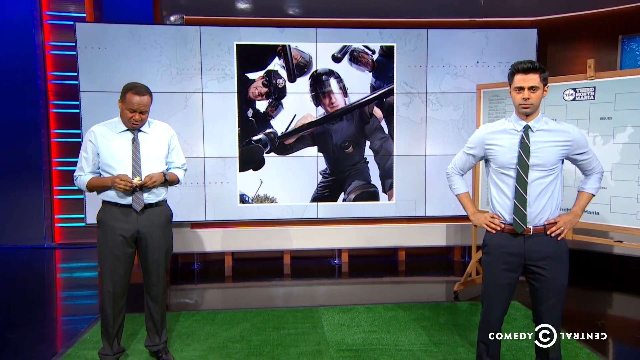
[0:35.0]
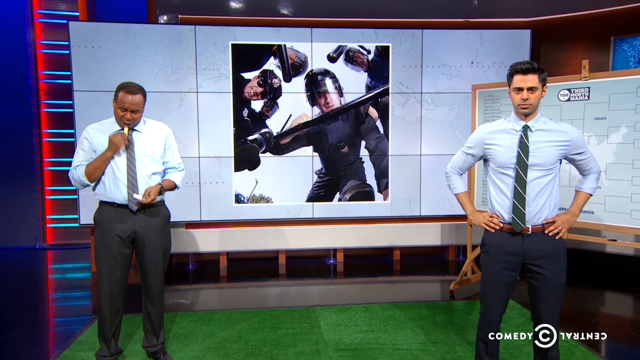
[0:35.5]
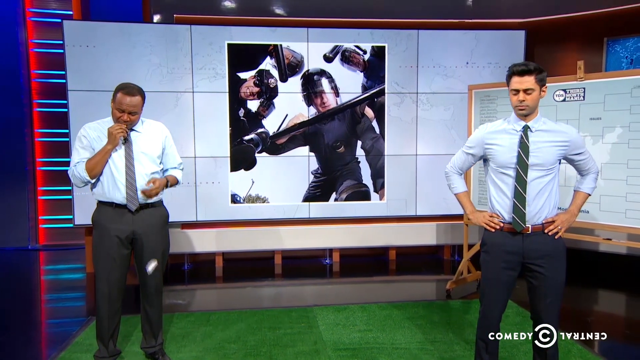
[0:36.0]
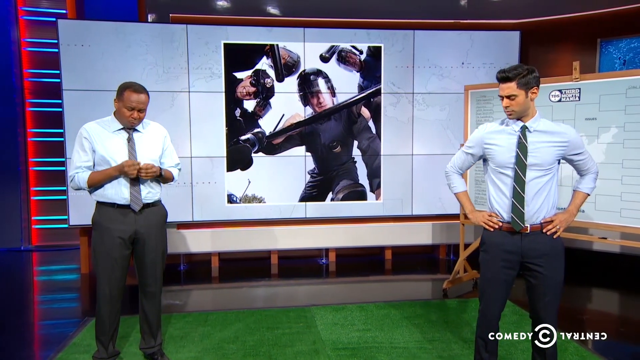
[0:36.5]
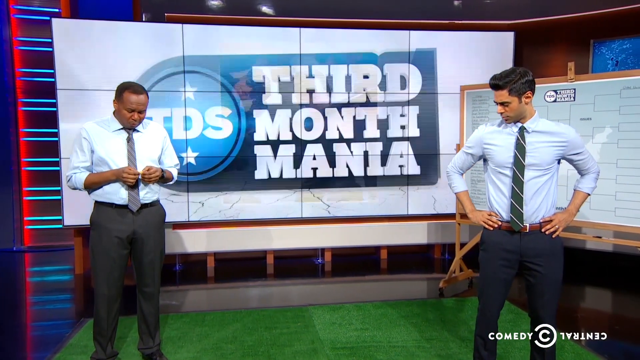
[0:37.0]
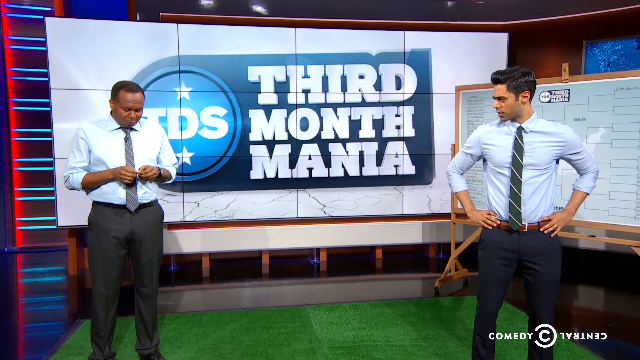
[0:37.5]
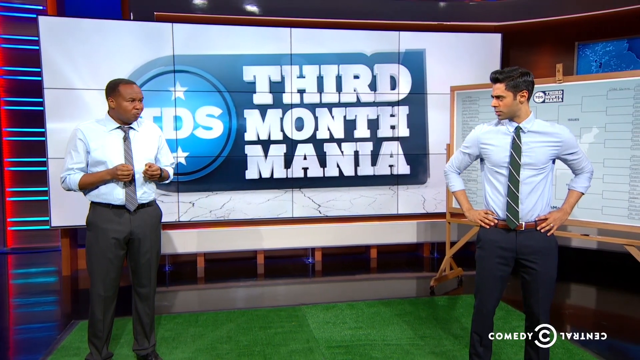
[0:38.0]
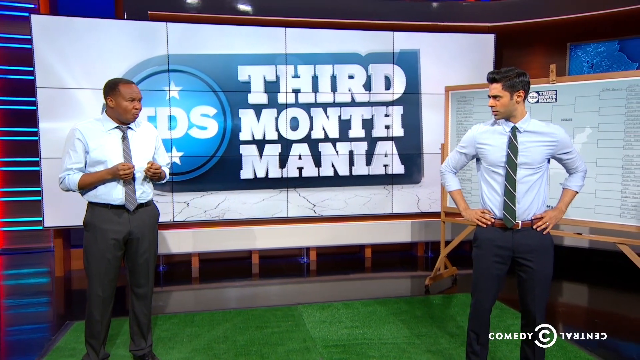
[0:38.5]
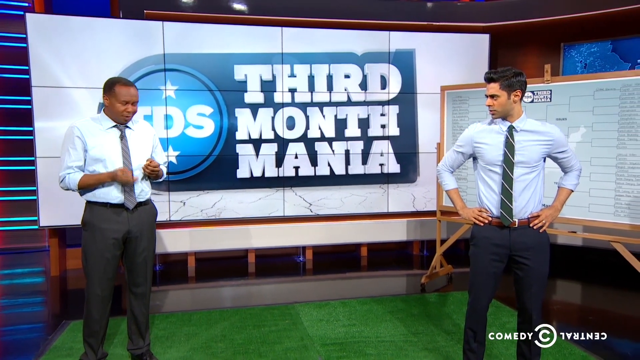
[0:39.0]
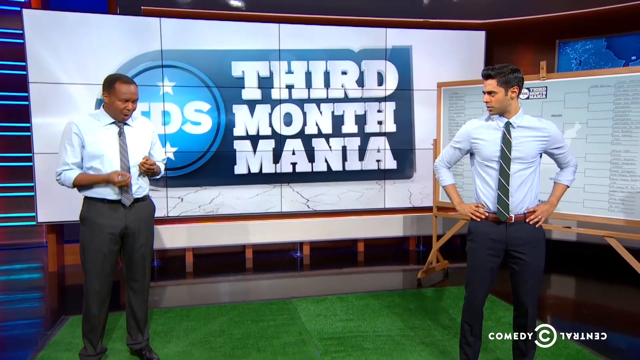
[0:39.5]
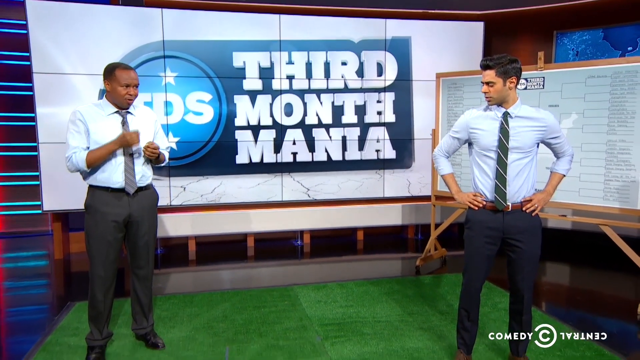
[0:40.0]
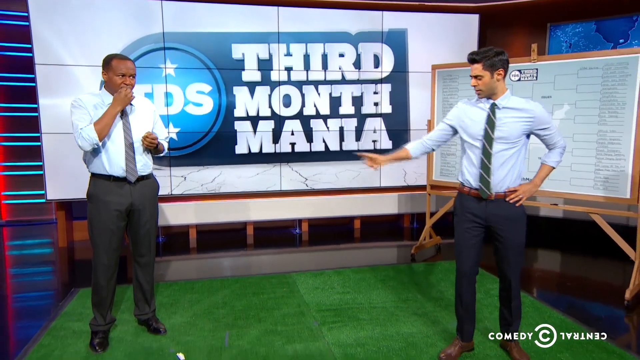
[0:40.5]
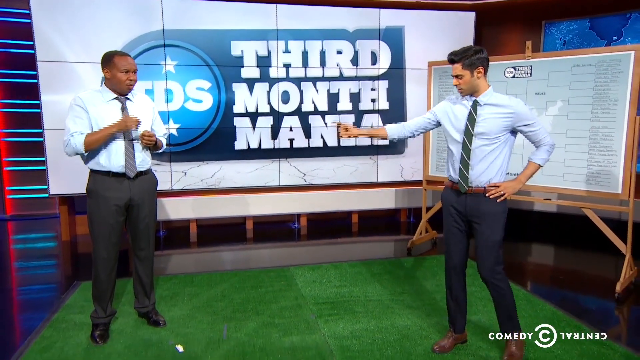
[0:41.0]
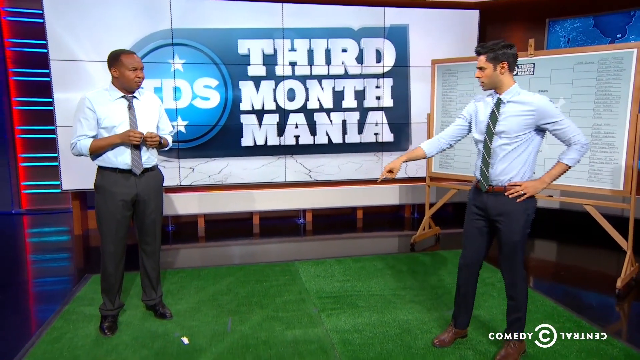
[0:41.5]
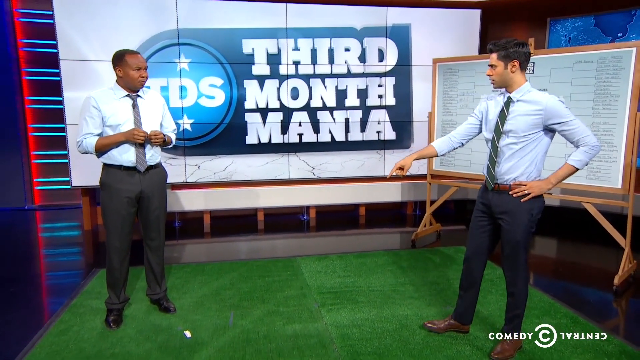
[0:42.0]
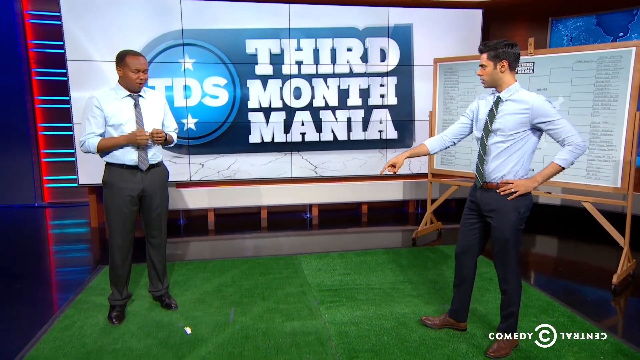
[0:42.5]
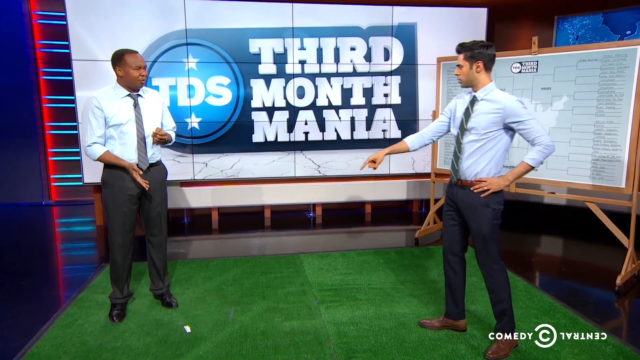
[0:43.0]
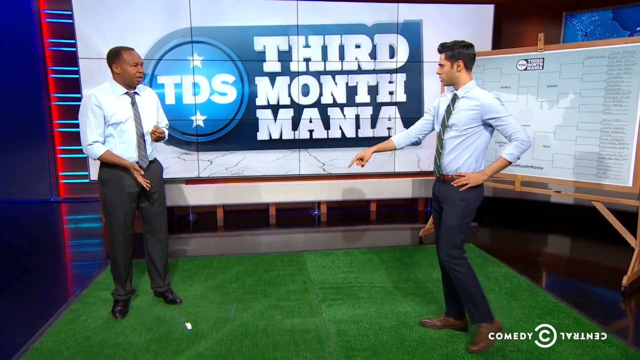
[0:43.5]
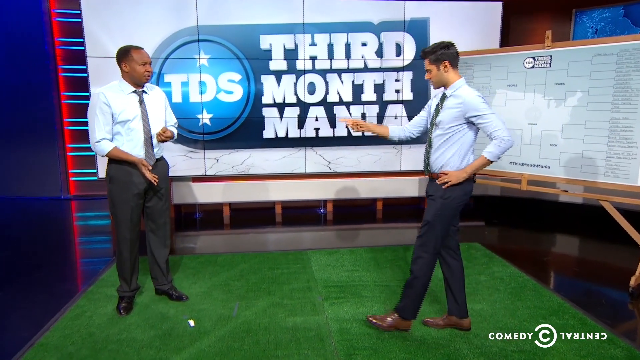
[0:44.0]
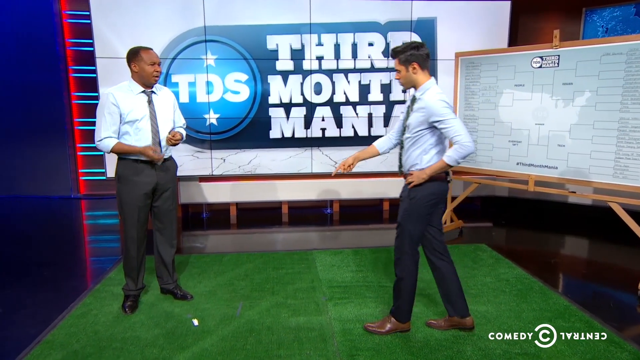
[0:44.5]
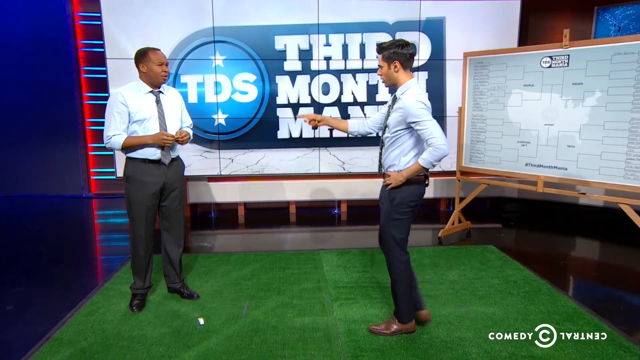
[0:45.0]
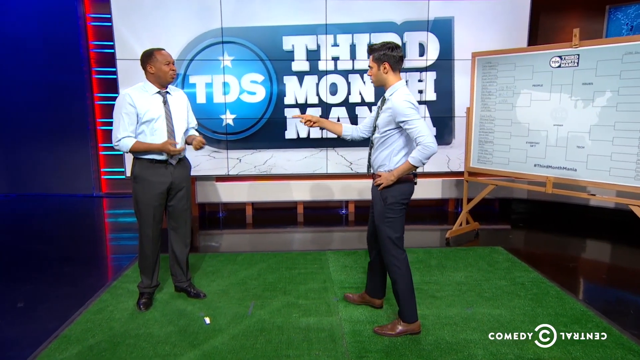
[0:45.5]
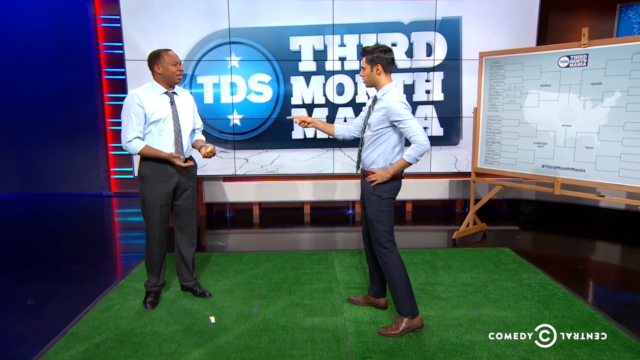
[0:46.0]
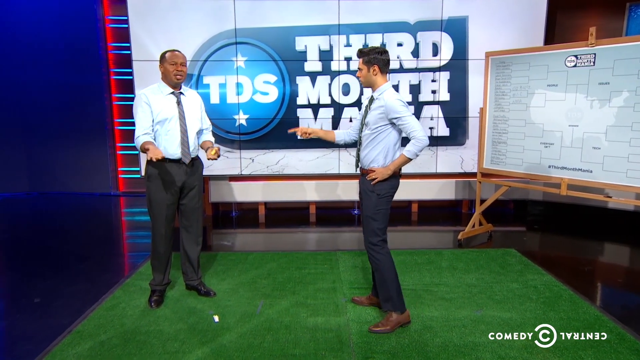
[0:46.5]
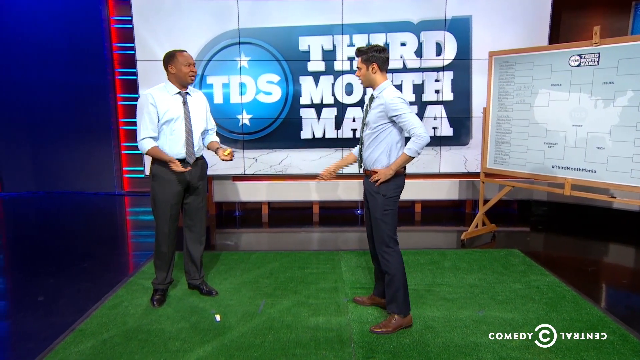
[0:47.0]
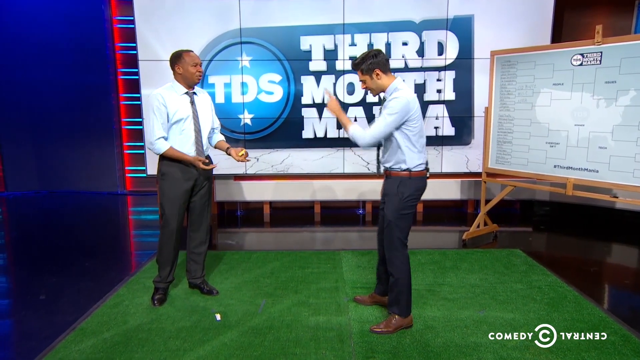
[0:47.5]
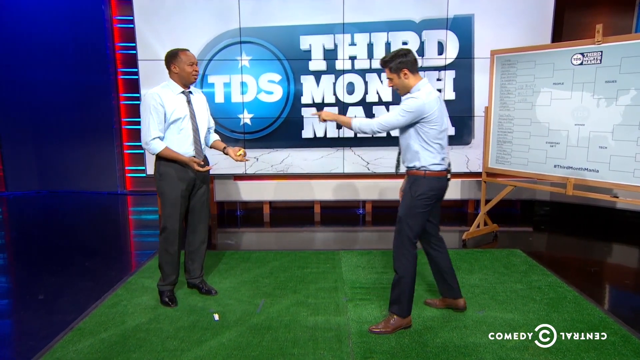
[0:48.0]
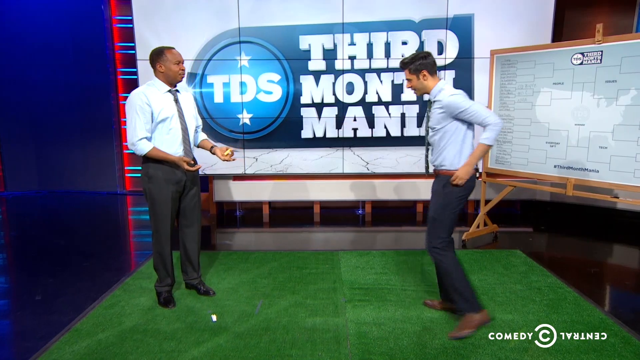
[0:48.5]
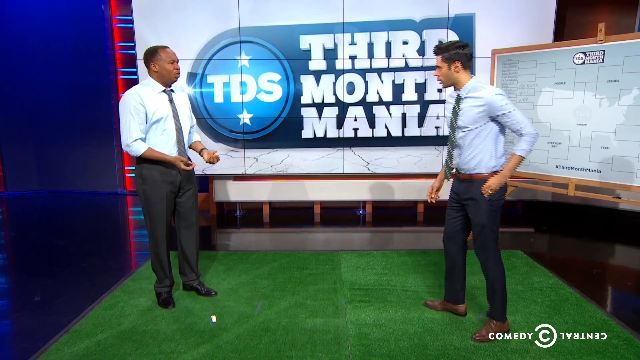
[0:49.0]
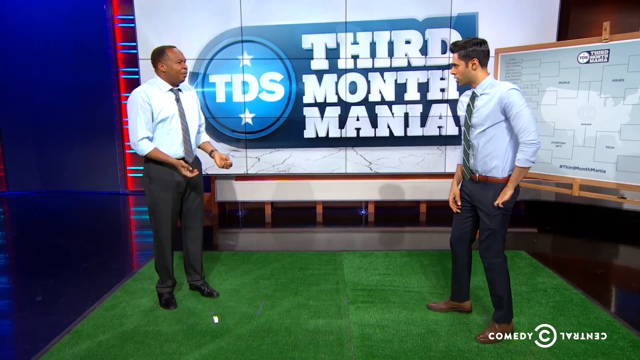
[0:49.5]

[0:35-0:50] One man unwraps what appears to be a piece of gum, takes a bite of it, and drops the silver wrapper onto the green turf. The other man points toward it and appears frustrated. The man who dropped it then points and holds out his hand, somewhat as if defending himself. The other man starts to reach toward his pocket, appearing maybe to pull something out, and it looks like a somewhat heated argument. The man who did not drop anything walks toward the other, and they stand closer together. The exchange appears more heated at this point, and they stare at each other with tense body language. The background remains the same, and the screen says "TDS THIRD MONTH MANIA" in white letters on what looks like a digital screen of the kind seen in a television studio.